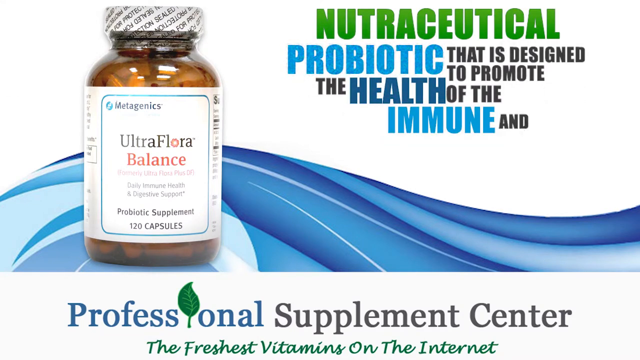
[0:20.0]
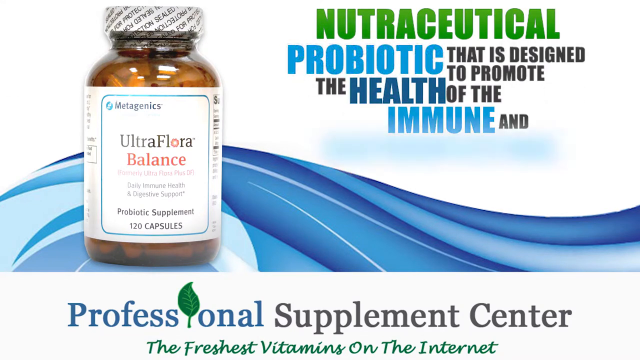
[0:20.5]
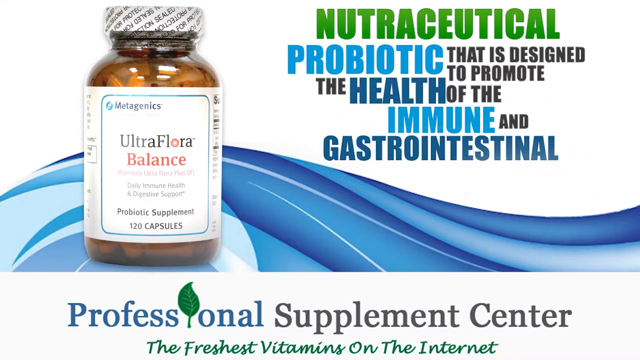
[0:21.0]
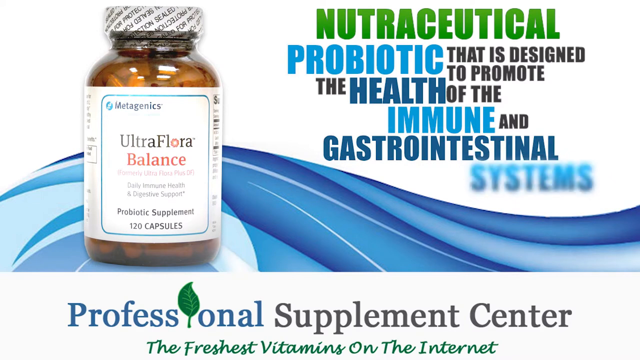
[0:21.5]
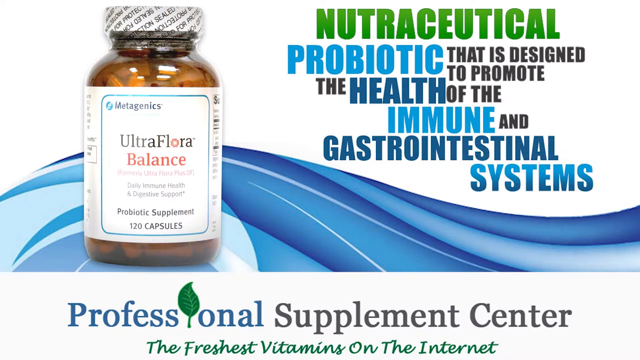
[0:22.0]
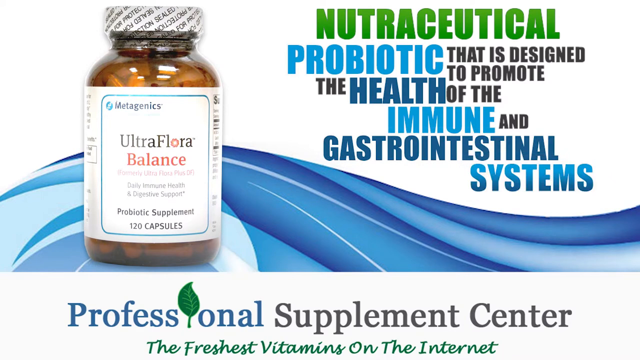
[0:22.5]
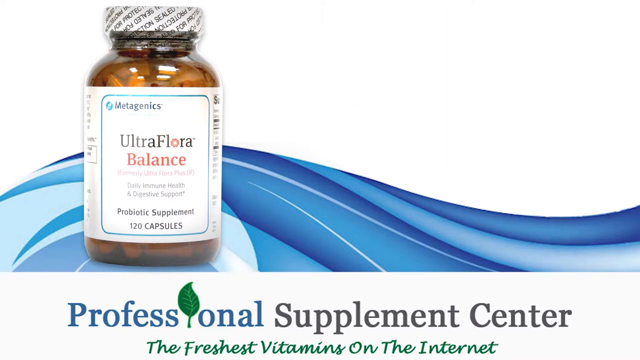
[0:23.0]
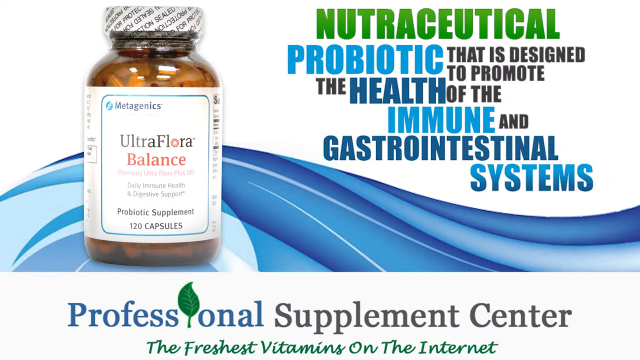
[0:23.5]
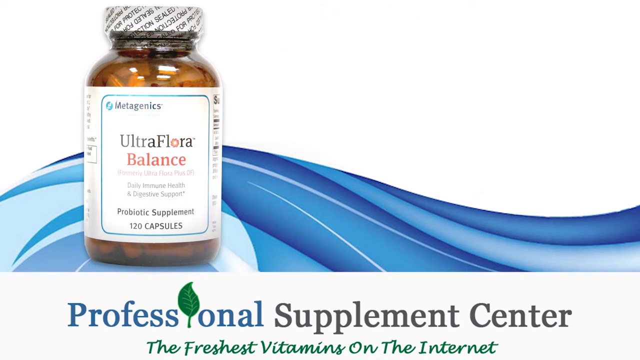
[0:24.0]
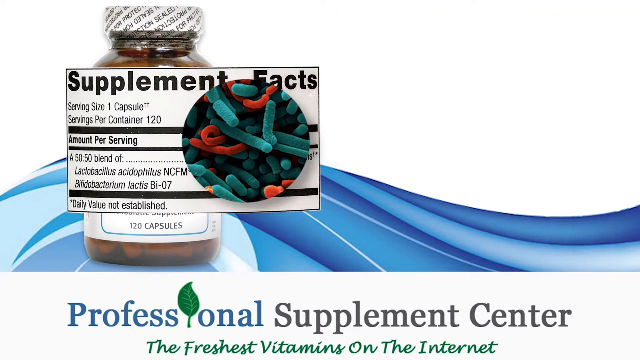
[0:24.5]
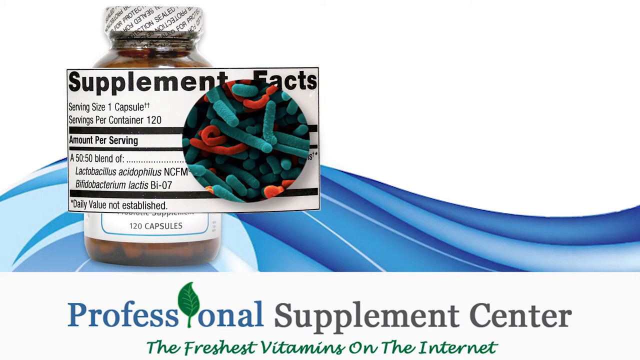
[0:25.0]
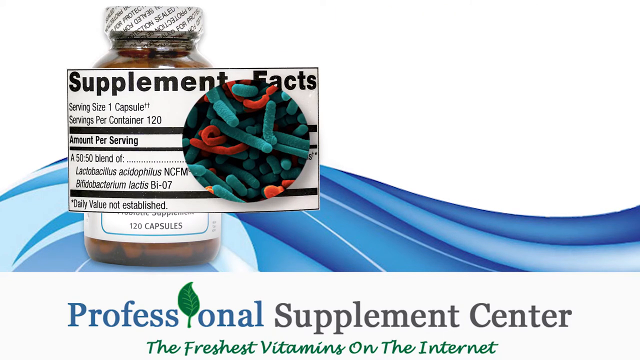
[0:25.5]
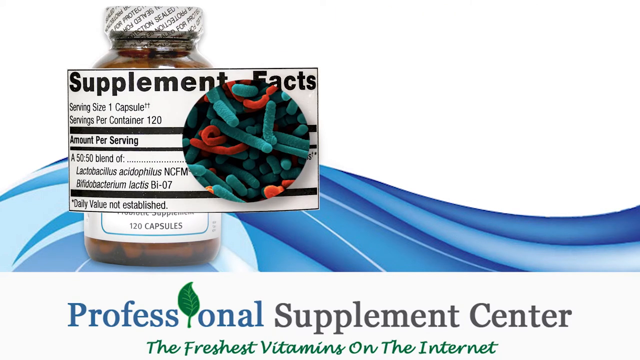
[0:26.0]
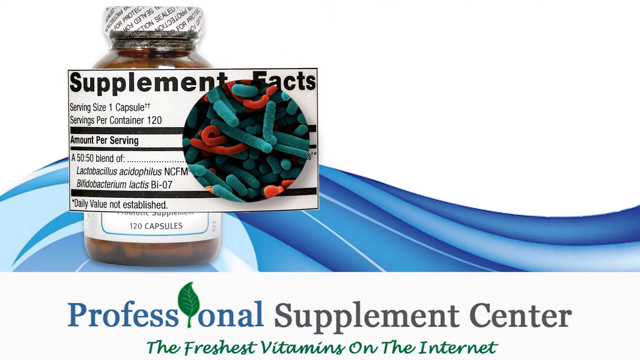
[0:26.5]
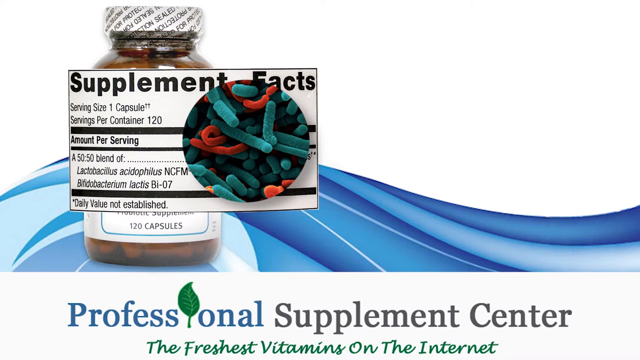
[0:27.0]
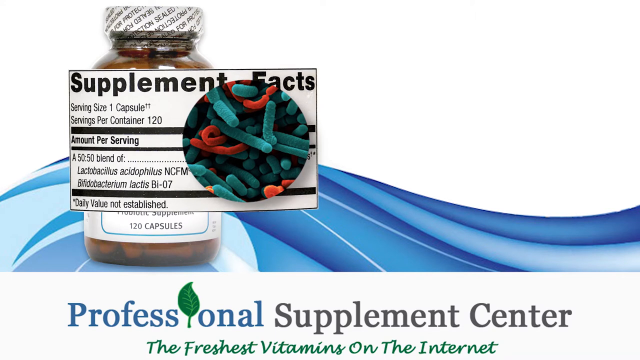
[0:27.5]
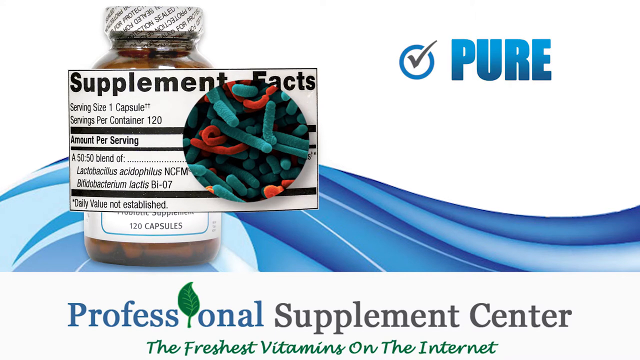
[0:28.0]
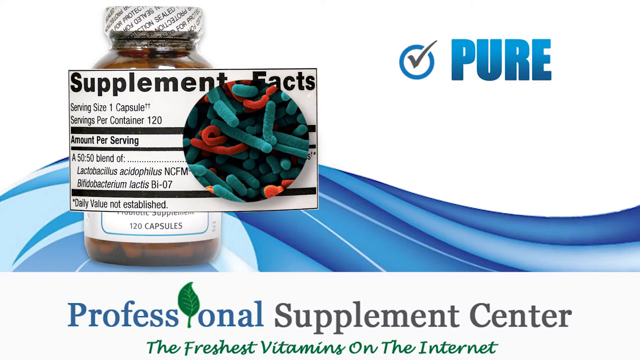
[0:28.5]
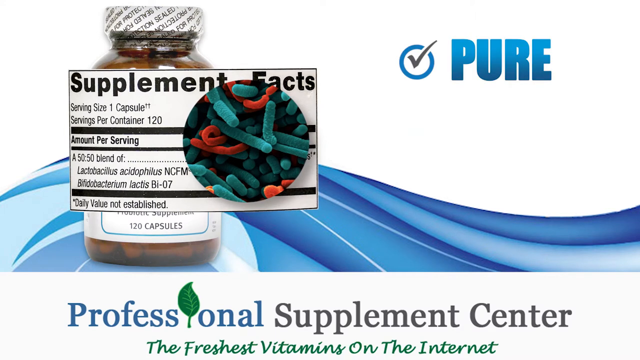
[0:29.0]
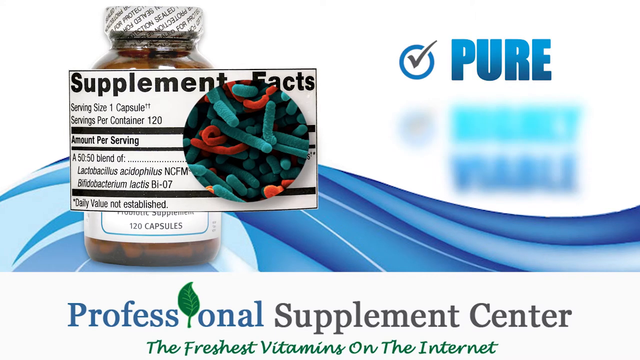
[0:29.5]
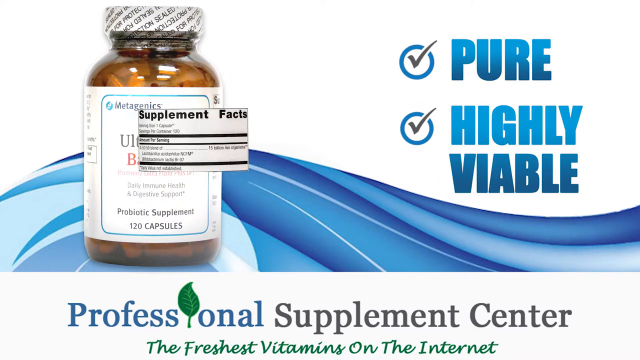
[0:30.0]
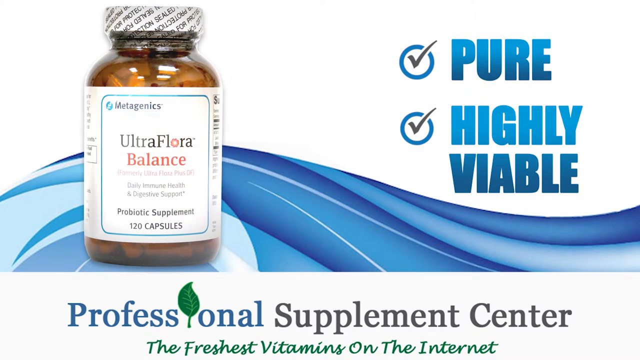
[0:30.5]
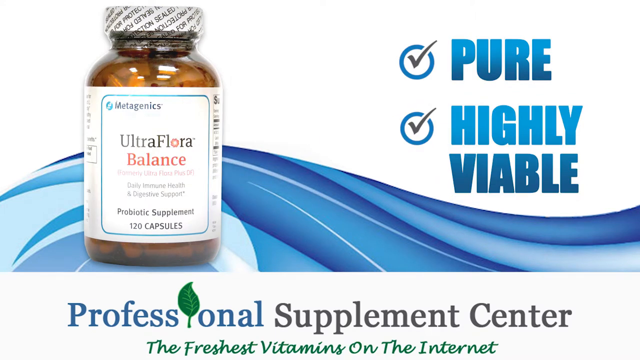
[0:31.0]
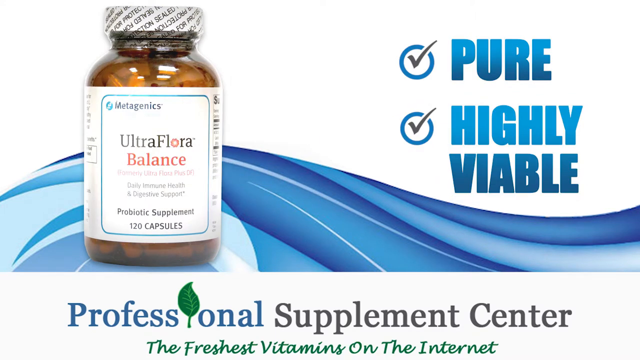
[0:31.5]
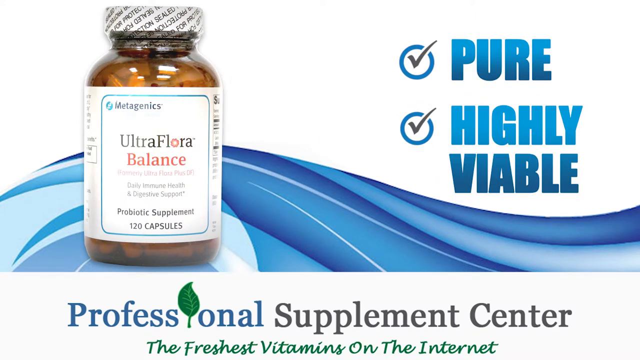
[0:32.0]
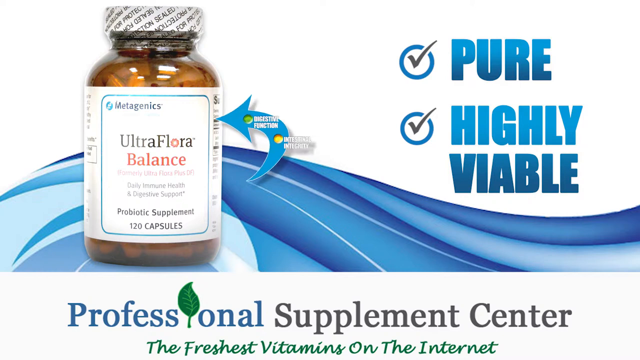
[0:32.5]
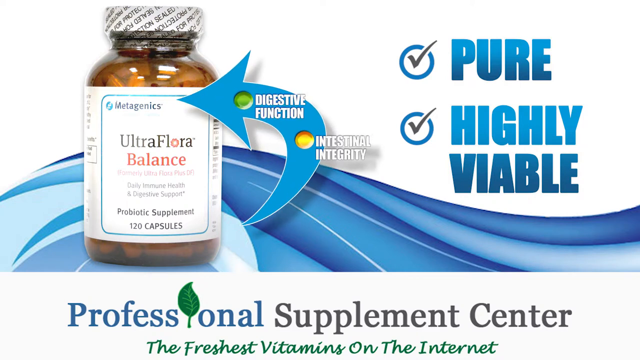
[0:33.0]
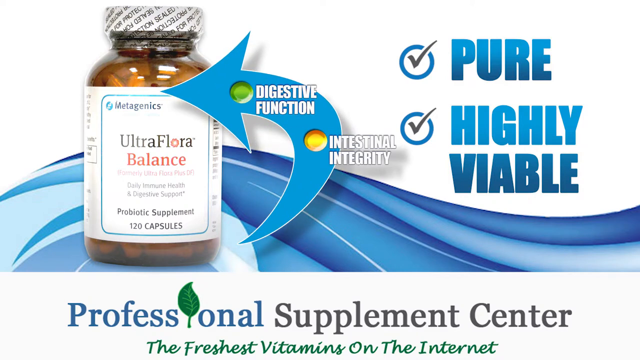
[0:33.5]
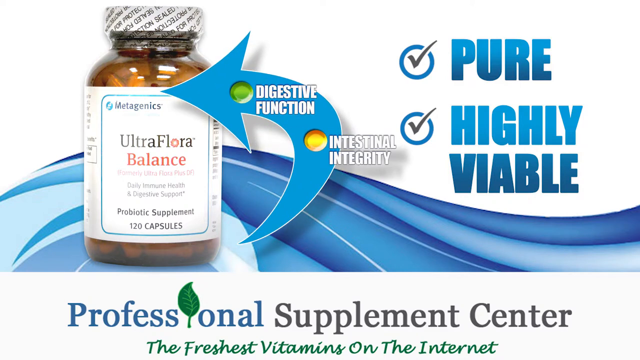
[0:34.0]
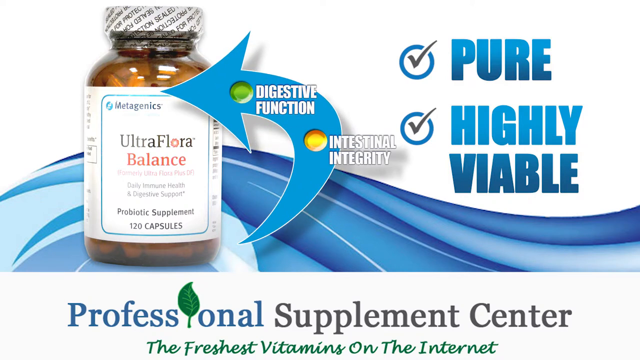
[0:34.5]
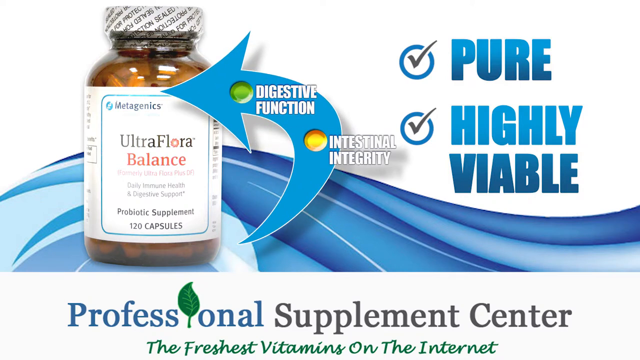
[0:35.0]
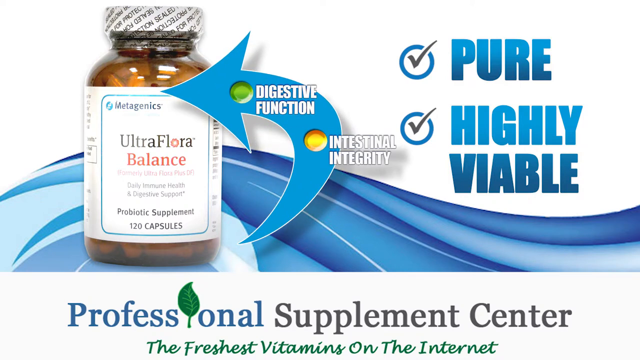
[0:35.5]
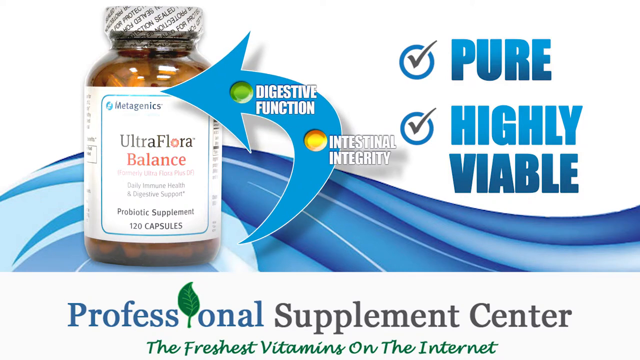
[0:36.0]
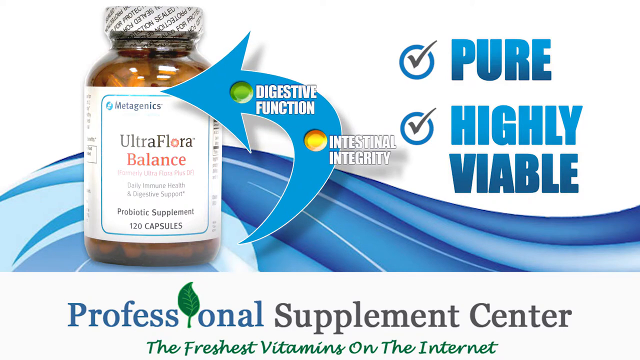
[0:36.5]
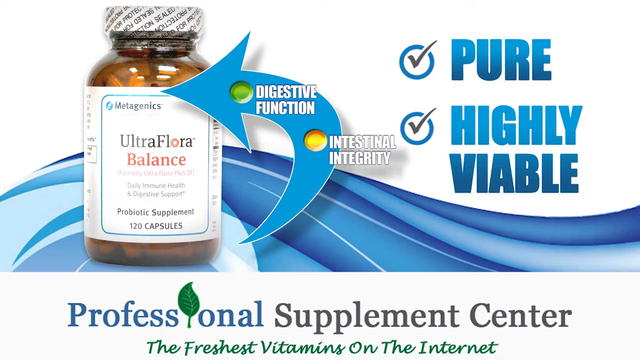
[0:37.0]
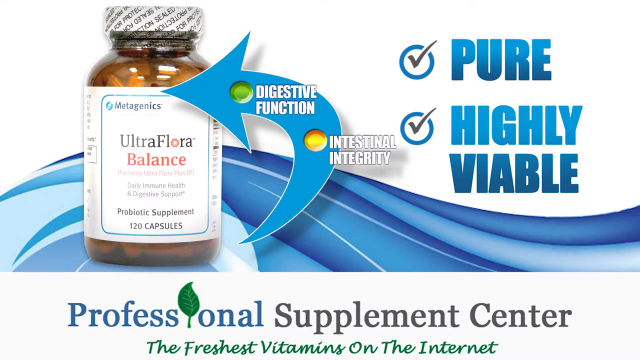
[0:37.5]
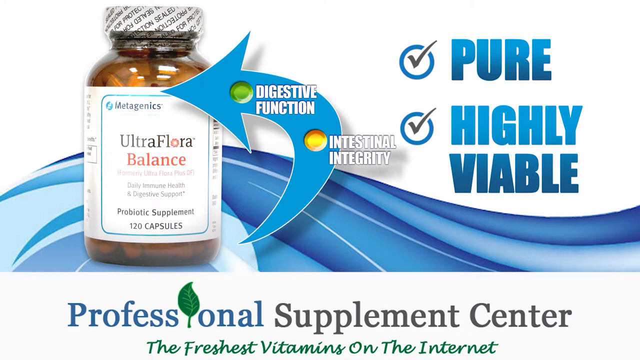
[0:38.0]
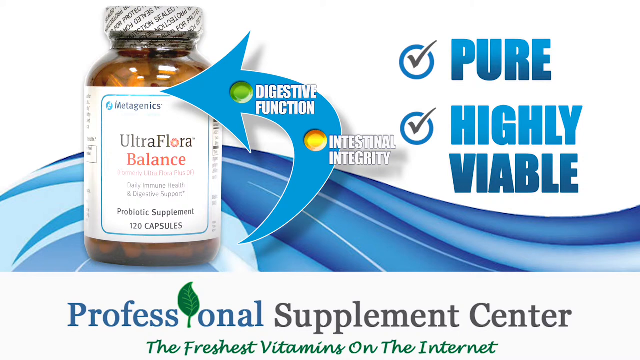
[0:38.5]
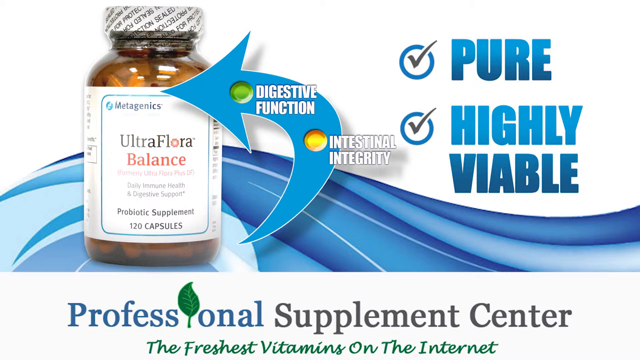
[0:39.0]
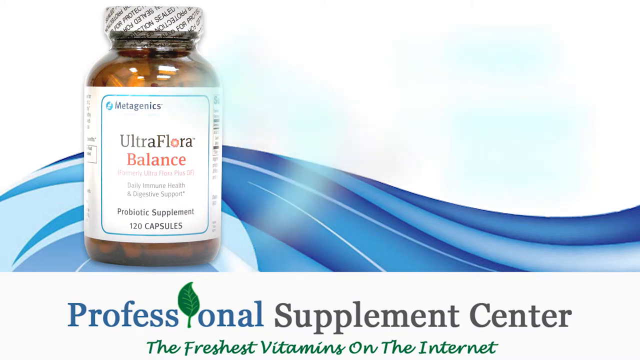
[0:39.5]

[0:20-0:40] Information about the product describes it as a nutraceutical probiotic designed to promote the health of the immune and gastrointestinal system. A supplement facts panel lists 1 capsule, 120 per container, an amount per serving, a 50 to 50 blend, and "Daily value not established". Something green and red, not identifiable, is also shown. Further information says the product is pure and highly viable and mentions digestive function and intestinal integrity. The product seems to be an immune booster or supplement.